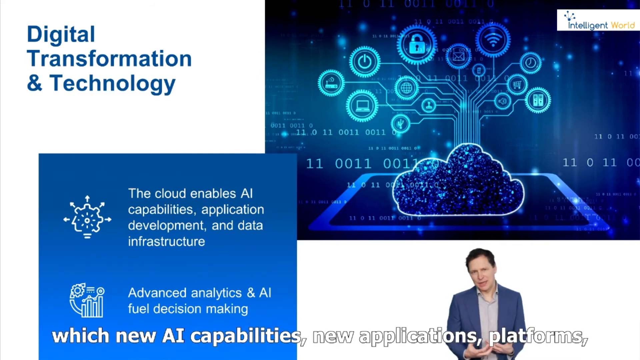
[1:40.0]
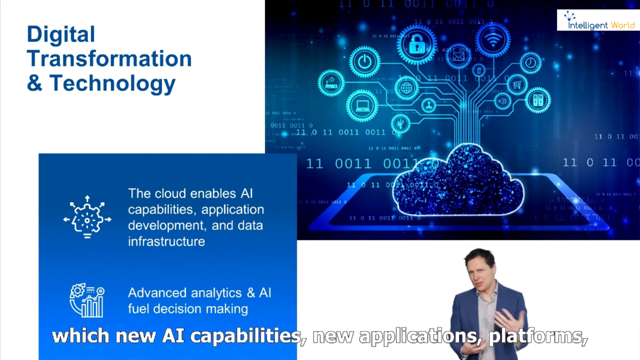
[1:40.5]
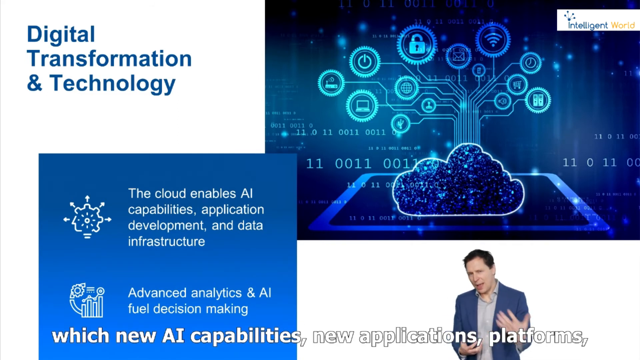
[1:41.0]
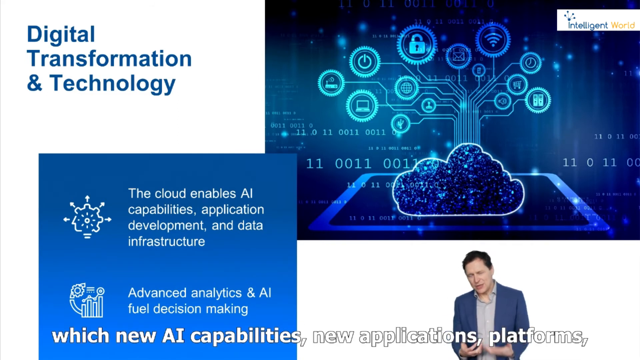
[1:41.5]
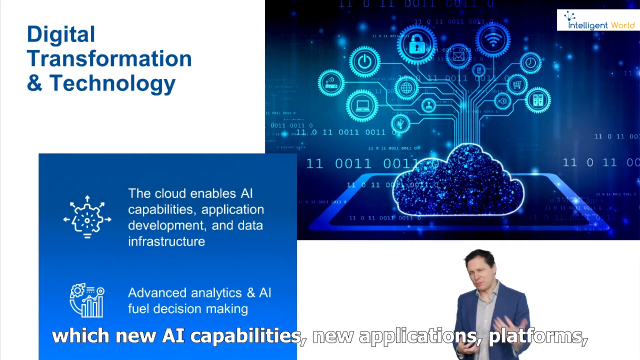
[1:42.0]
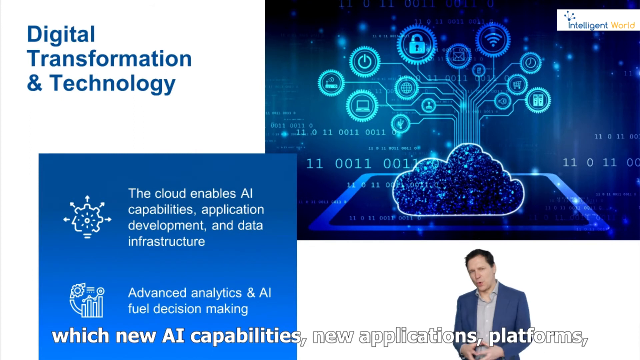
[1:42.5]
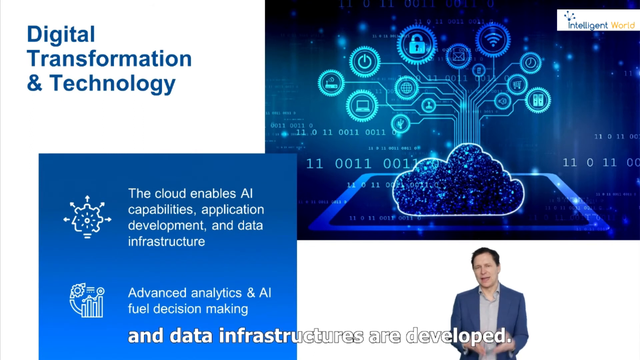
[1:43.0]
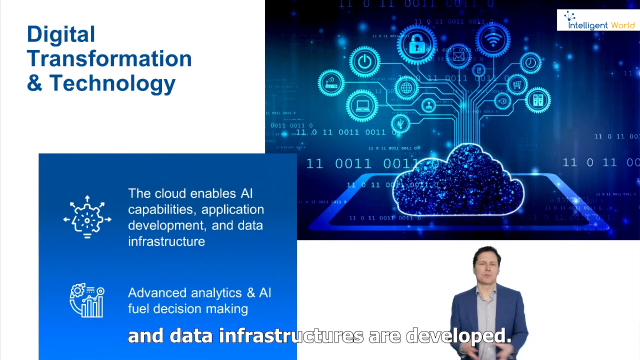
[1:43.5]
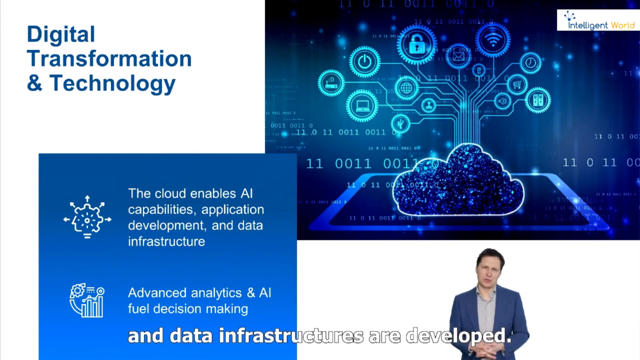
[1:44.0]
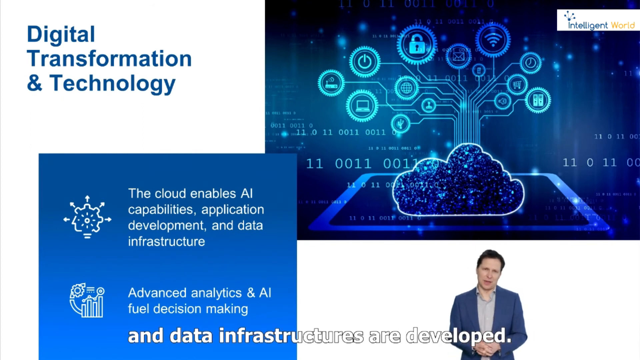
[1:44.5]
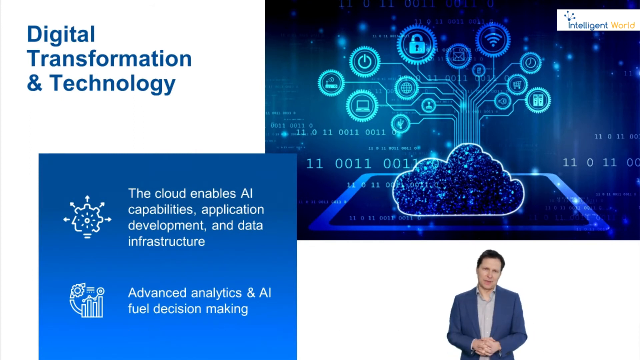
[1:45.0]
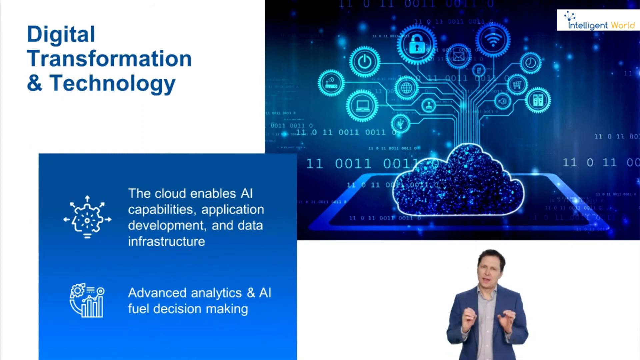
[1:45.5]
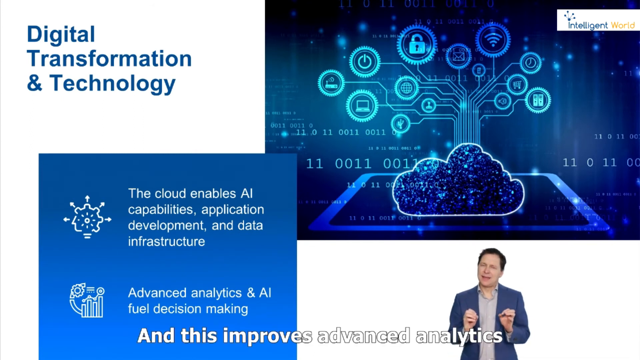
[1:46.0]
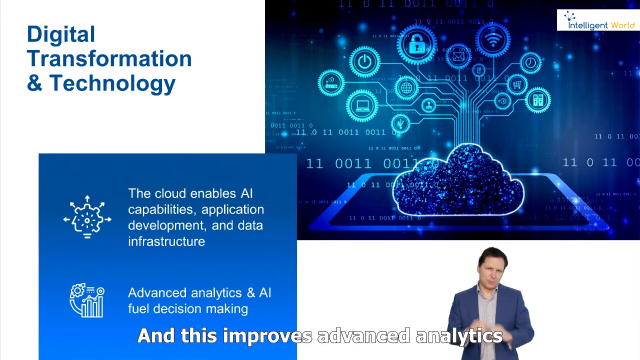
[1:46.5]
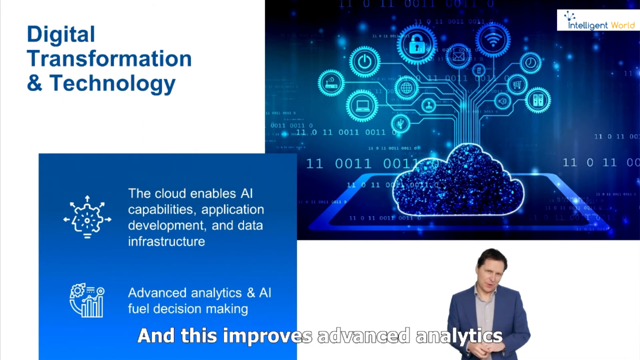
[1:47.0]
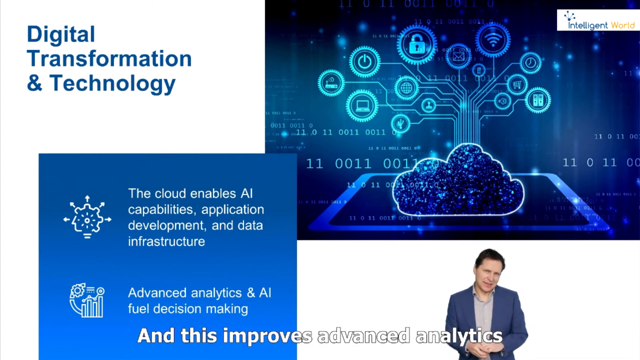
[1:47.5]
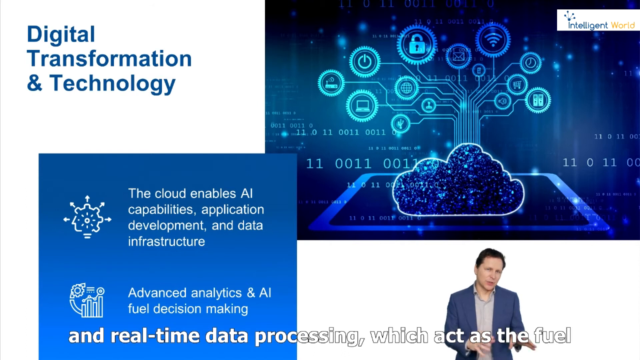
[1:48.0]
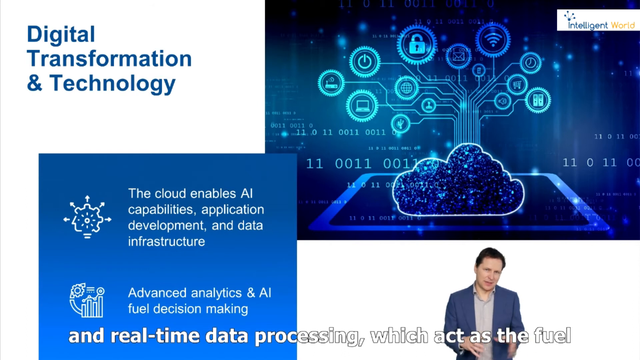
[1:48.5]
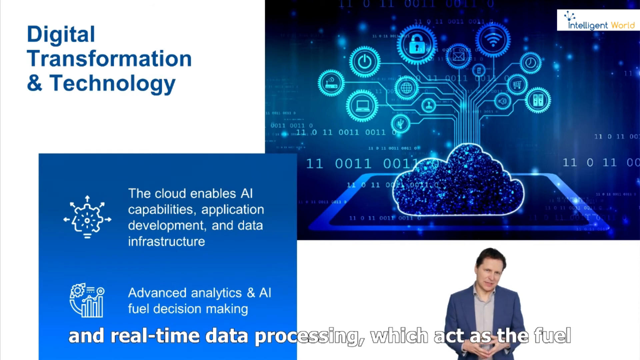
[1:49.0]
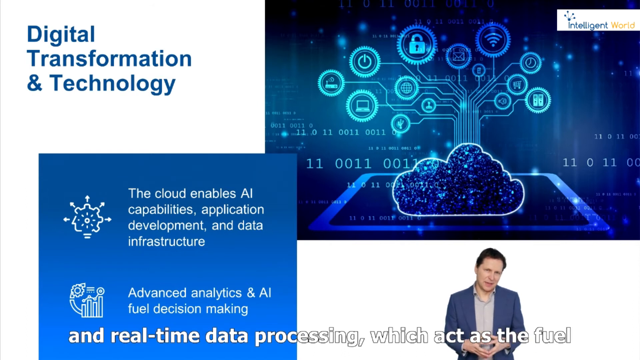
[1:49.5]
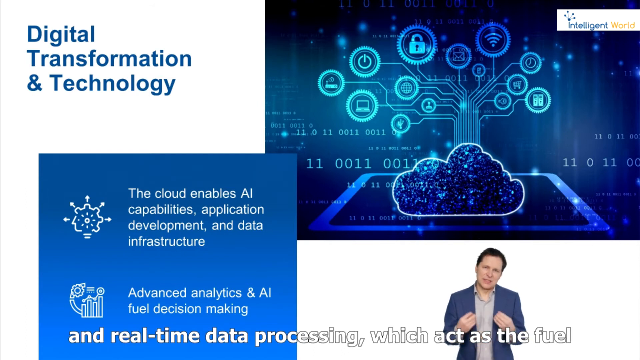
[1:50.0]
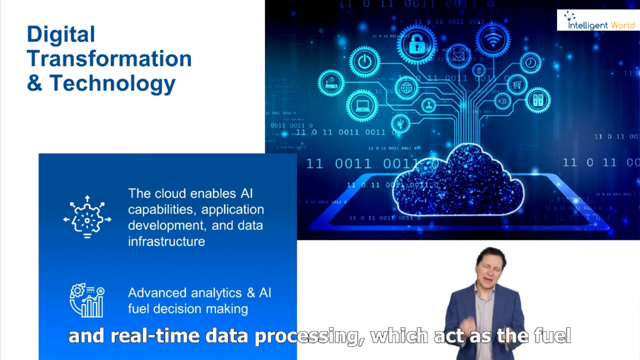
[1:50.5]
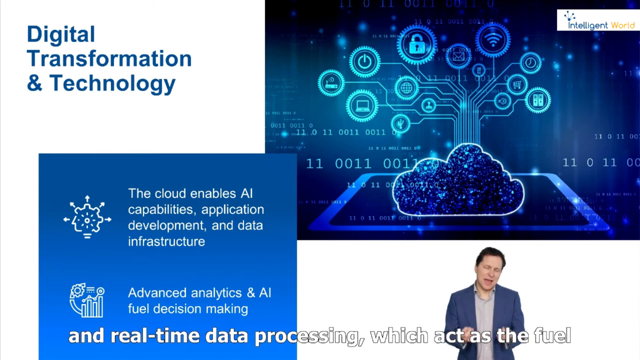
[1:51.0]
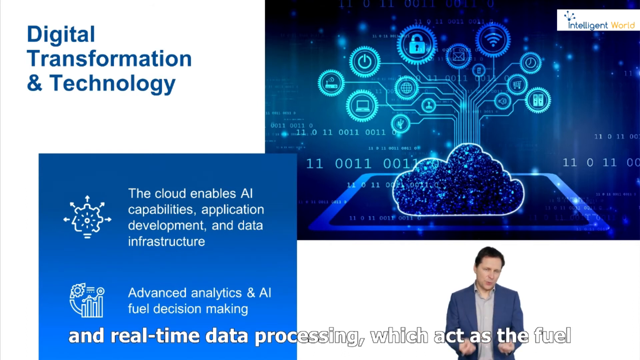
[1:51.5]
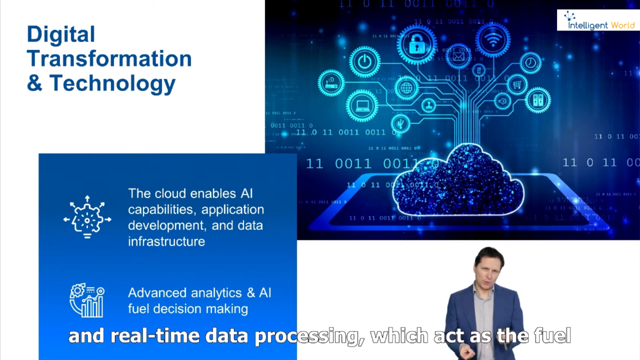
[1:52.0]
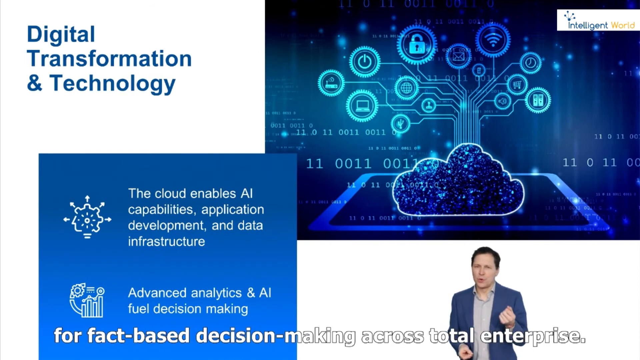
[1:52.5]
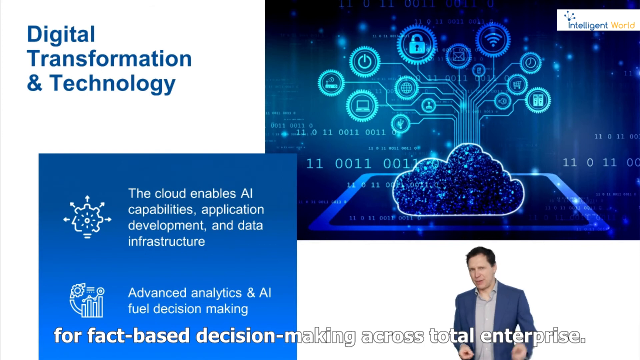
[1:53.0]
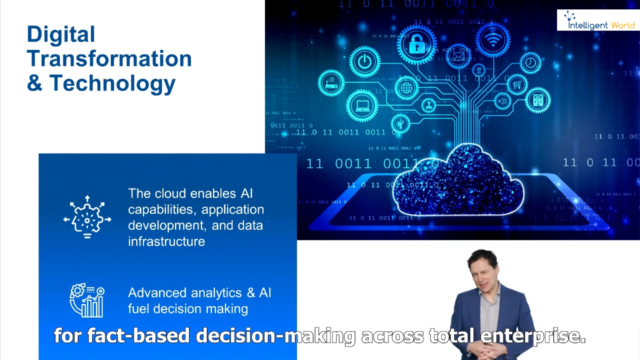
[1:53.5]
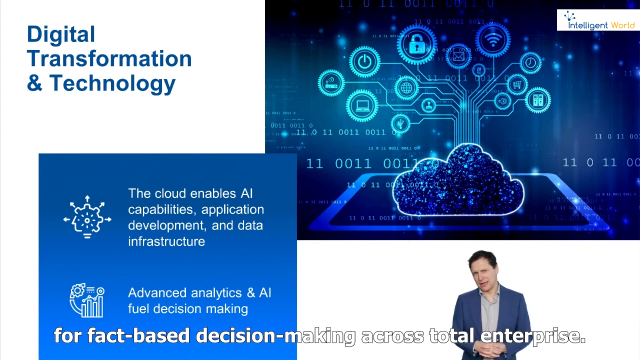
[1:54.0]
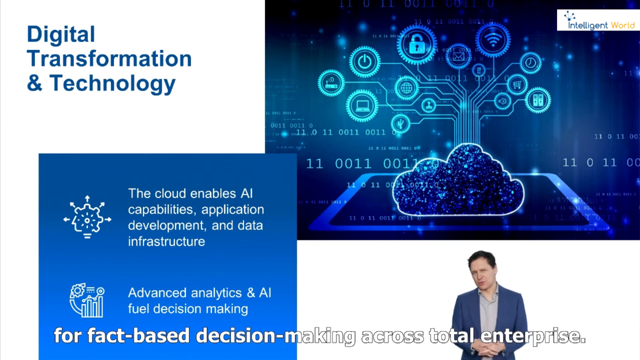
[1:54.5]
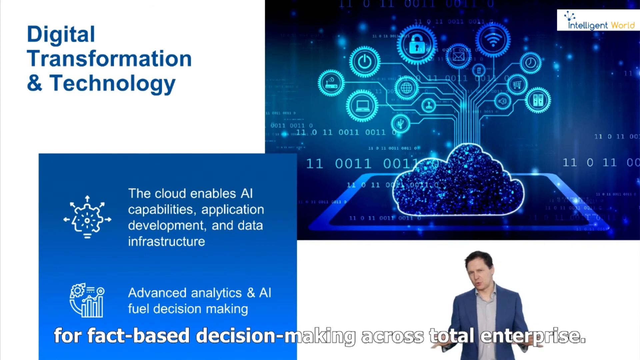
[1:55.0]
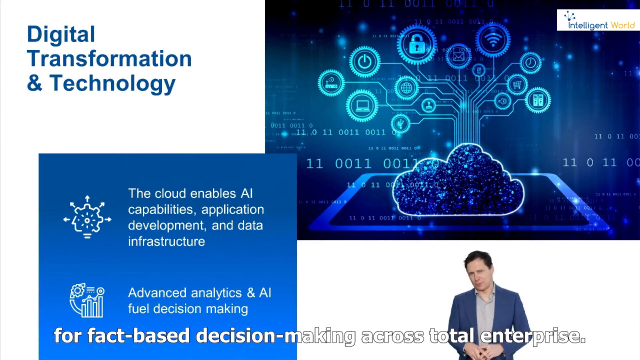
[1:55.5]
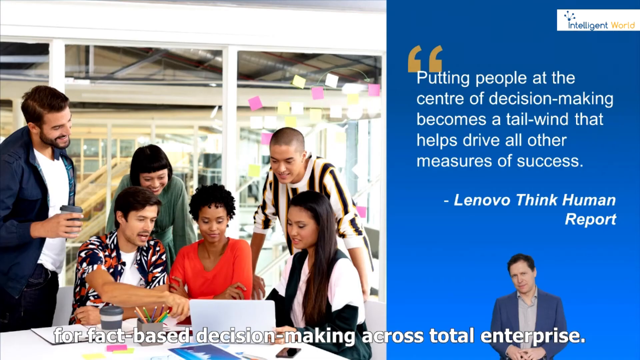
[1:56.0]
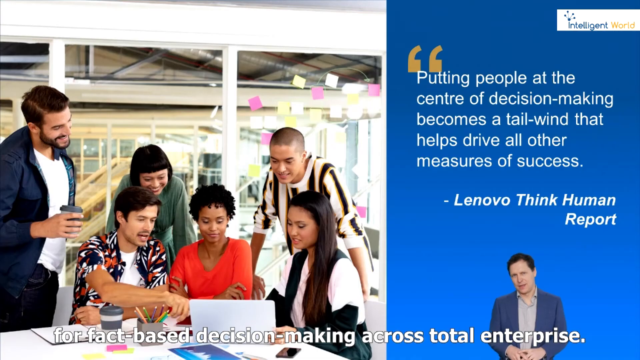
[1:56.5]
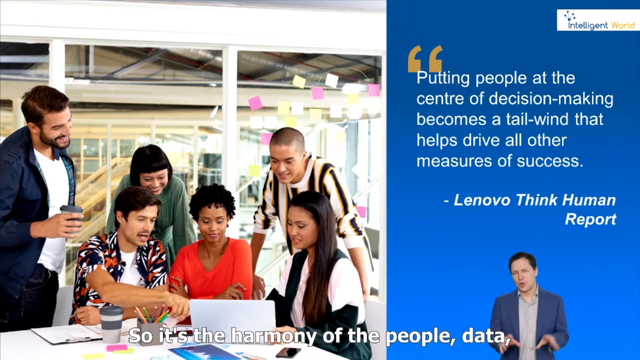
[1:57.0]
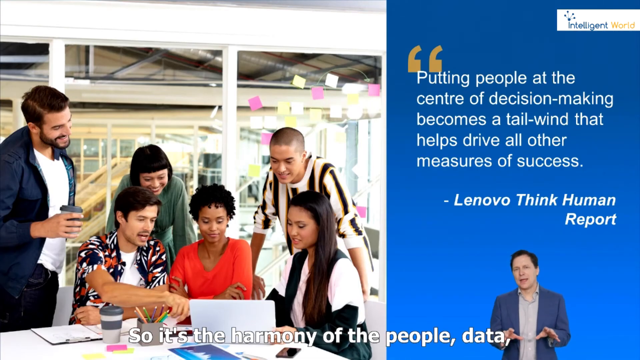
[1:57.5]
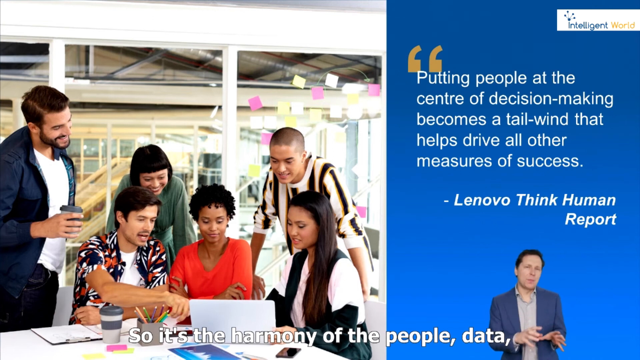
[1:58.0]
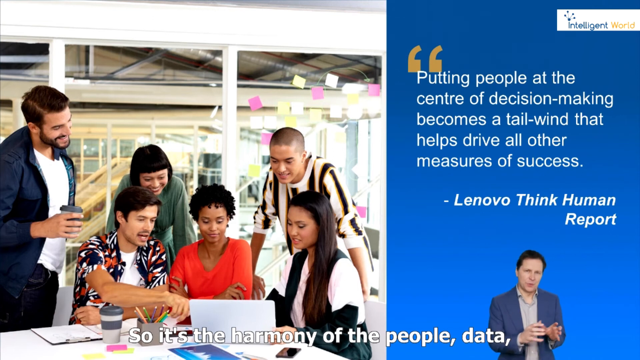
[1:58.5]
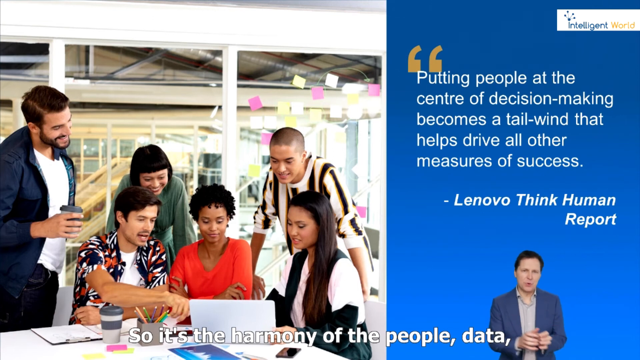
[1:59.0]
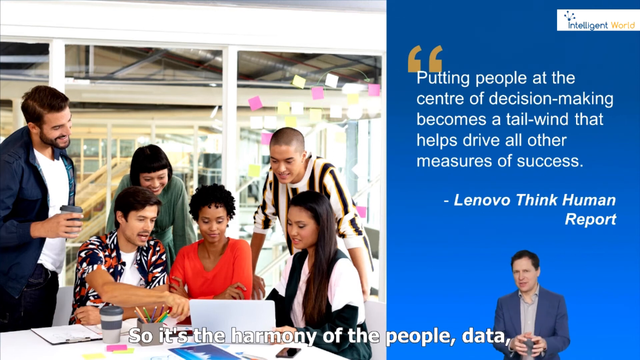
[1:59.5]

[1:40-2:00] The man giving the presentation talks in the lower right-hand corner while closed captions continue to come up, about data infrastructure and real-time data processing that acts as fuel. Another slide pops up showing what looks like a team of three men and three women, apparently between their 20s and 30s, in different attire. Two of the women have kind of short hair and one has longish hair; one man doesn't have much hair and the other two have short haircuts. They seem casual, in a group. The slide says "putting people at the center of decision-making becomes a tailwind that helps drive all other measures of success," with the quote attributed to Lenovo. The man keeps talking below in the right-hand corner.